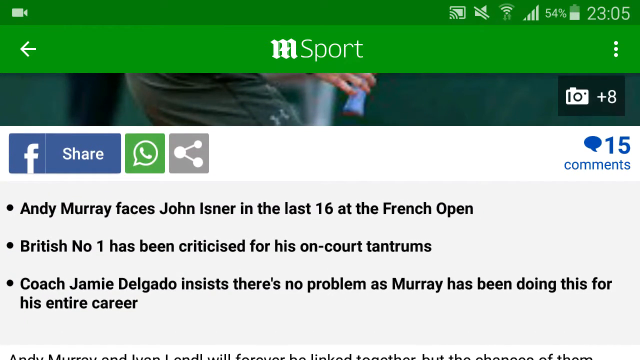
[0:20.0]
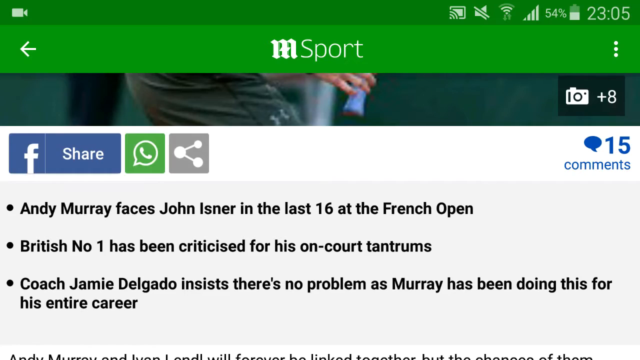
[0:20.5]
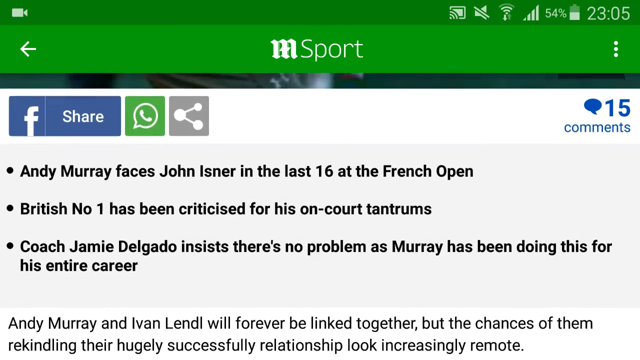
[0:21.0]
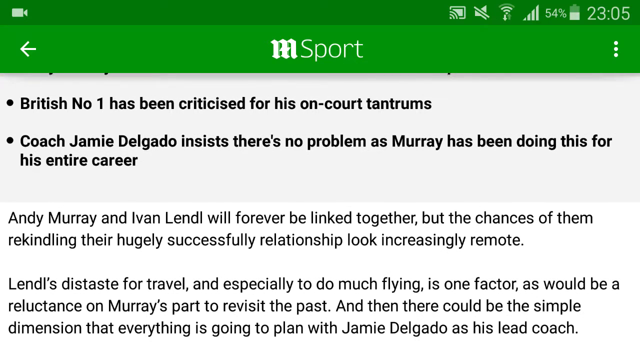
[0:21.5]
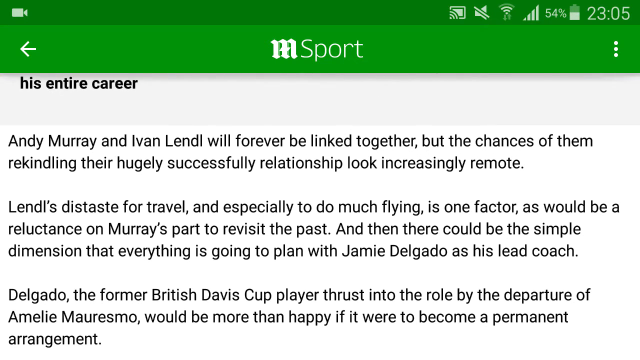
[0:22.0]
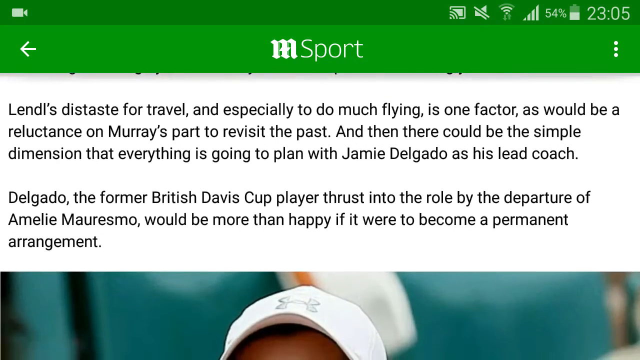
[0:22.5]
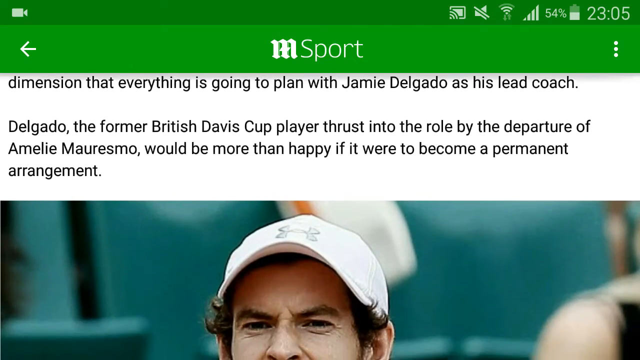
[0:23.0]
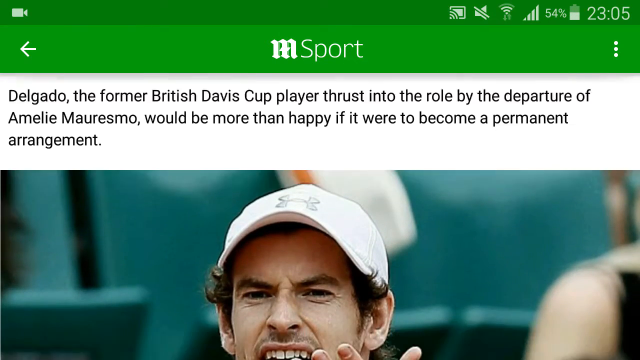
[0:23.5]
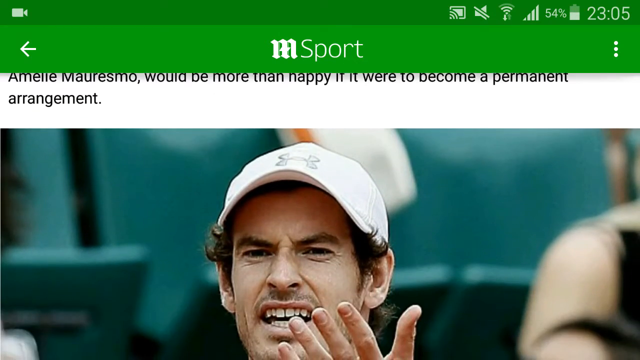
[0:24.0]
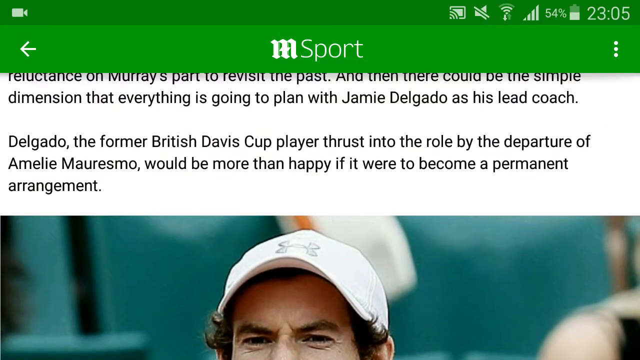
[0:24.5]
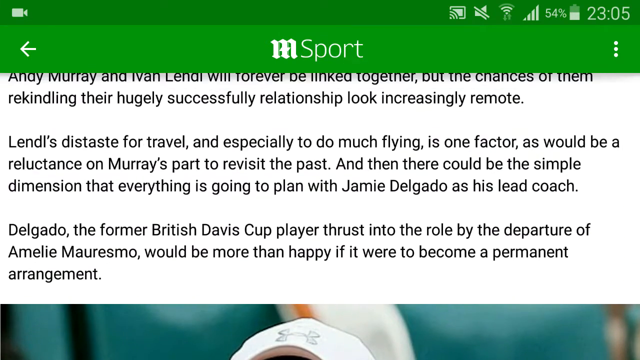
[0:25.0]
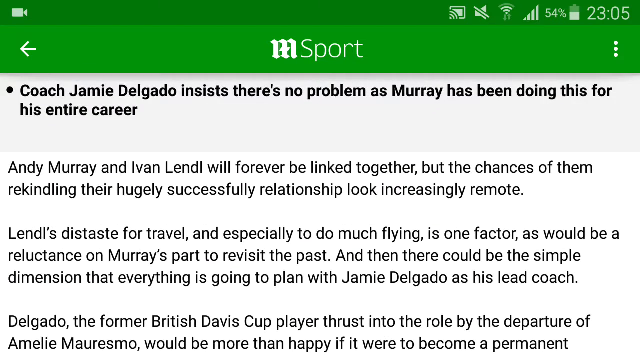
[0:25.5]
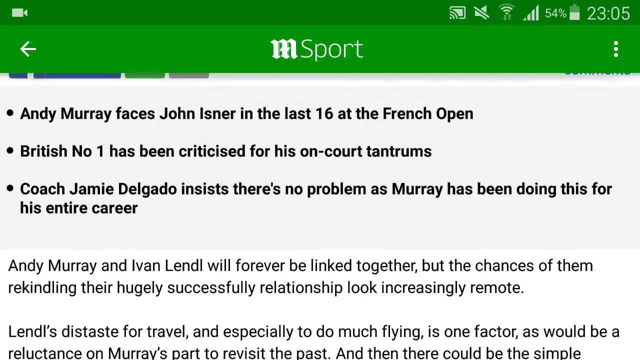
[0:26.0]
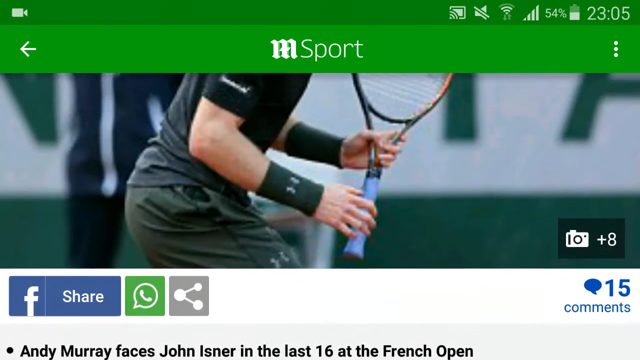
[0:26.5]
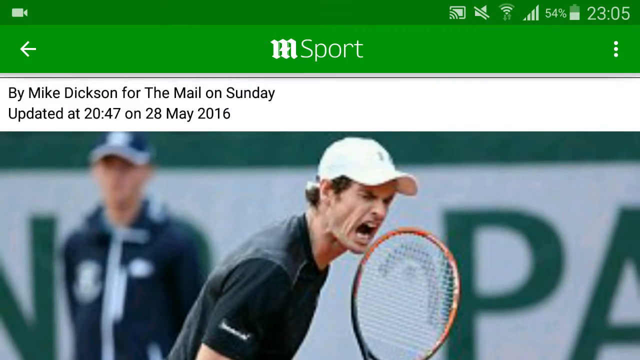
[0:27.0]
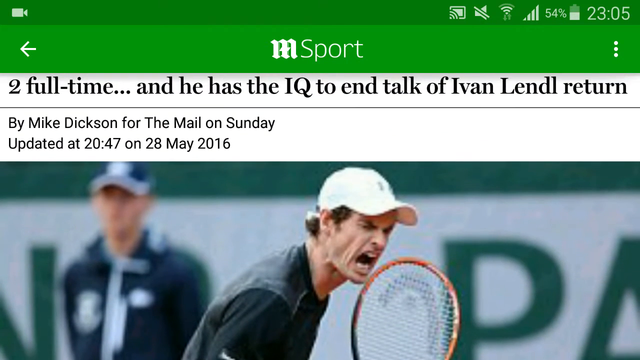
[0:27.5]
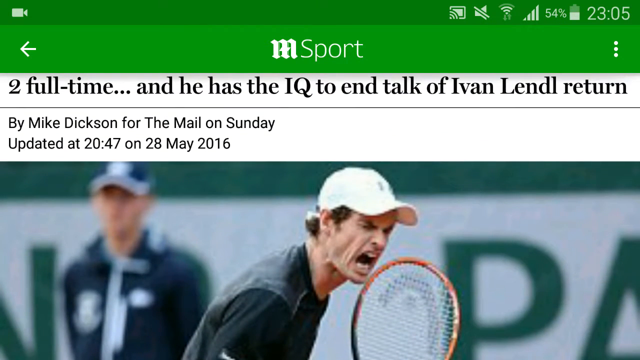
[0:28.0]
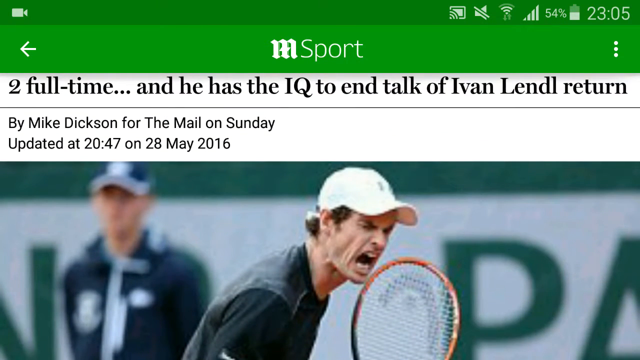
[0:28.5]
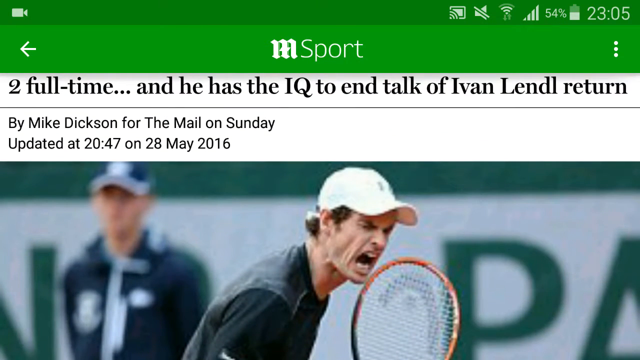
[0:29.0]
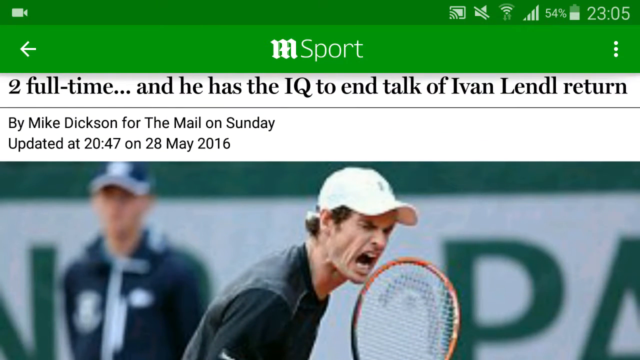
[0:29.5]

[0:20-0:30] A newspaper article about tennis and Andy Murray is open on a mobile phone, with "M Sport" in white on a green background at the top of the screen. The page is scrolled down past three dot points about Andy Murray and on through the paragraphs of the article. Further down is a photo of Andy Murray wearing a white baseball cap and lifting his left hand, as if a bit disgruntled with a call. The page is scrolled back up to the dot points and then to the top of the article, where a different photo shows Murray on court, looking like Roland Garros, wearing a black top and sort of celebrating aggressively after winning a point. The headline is partially visible, and then the page is scrolled down again.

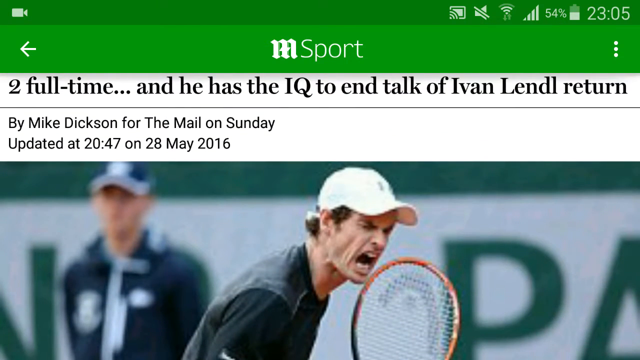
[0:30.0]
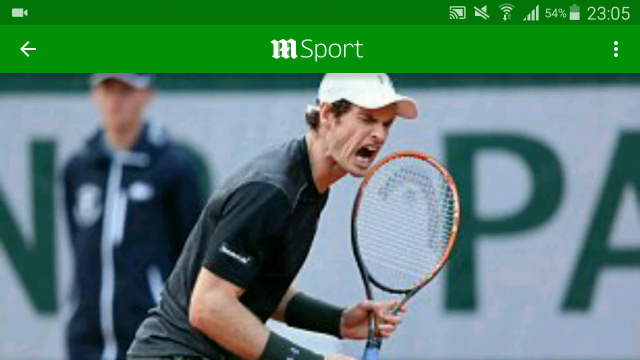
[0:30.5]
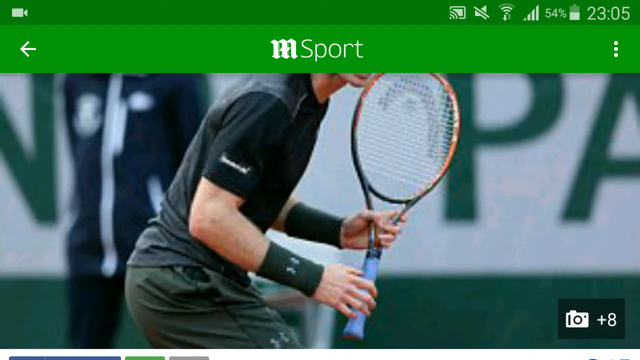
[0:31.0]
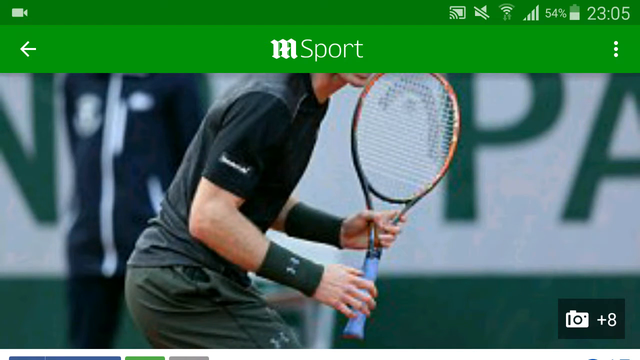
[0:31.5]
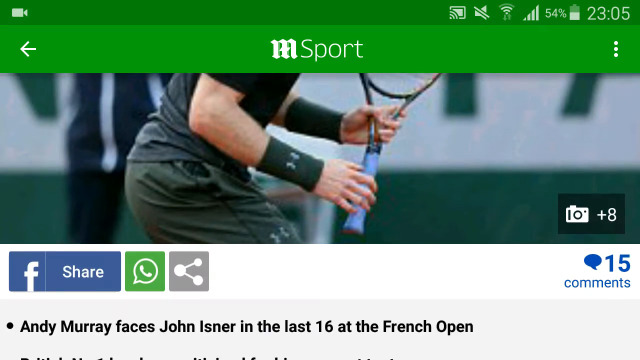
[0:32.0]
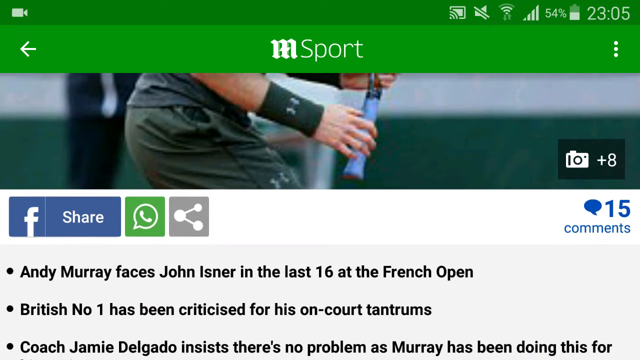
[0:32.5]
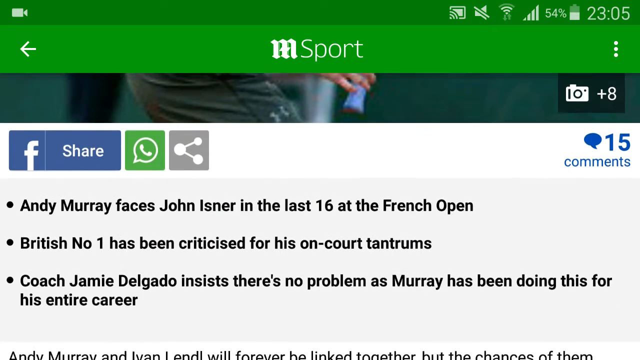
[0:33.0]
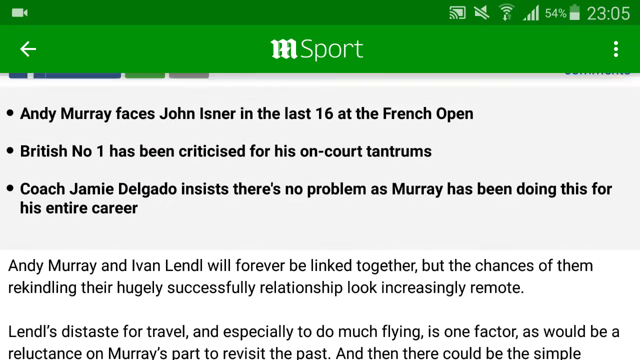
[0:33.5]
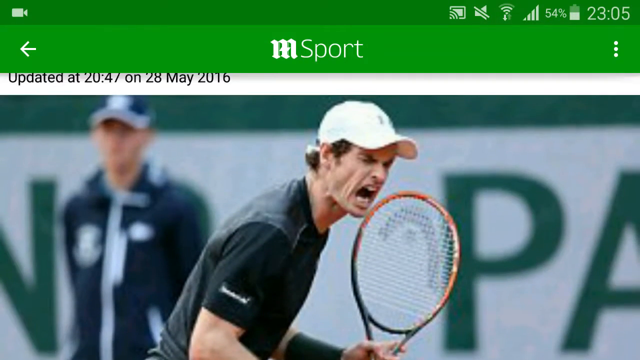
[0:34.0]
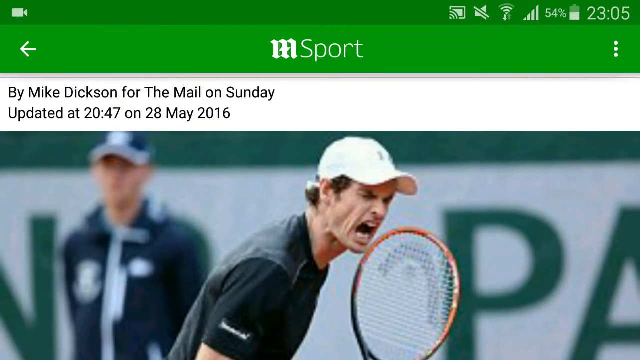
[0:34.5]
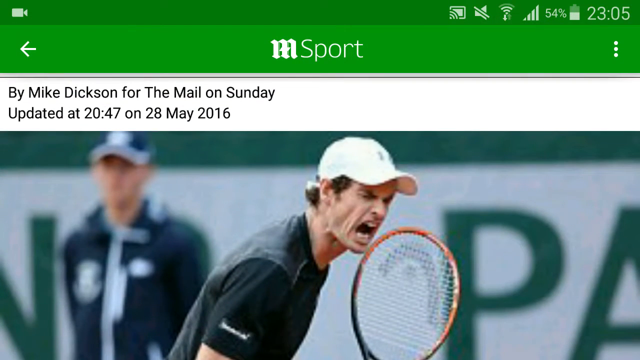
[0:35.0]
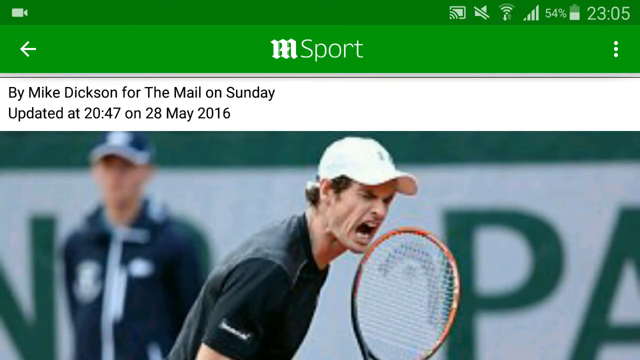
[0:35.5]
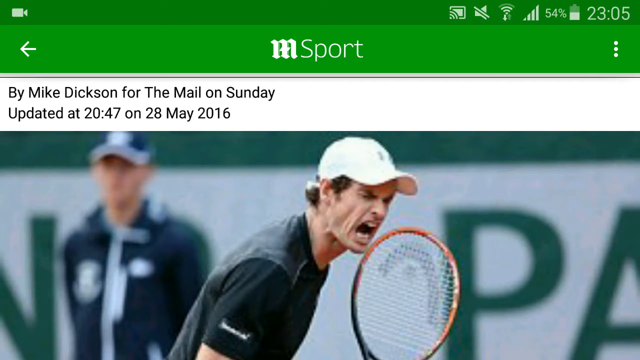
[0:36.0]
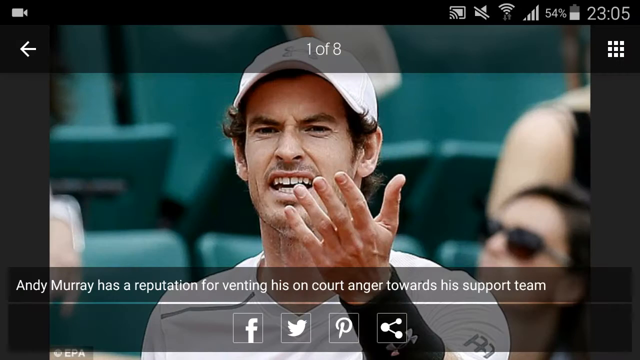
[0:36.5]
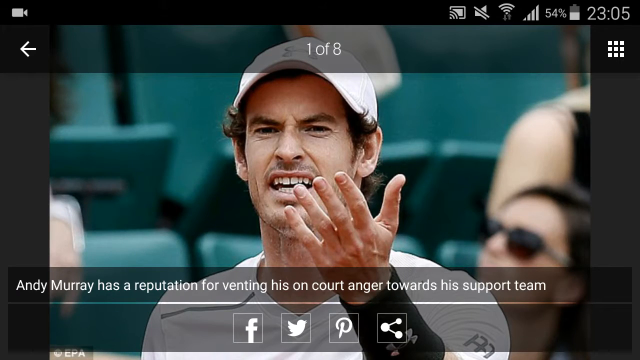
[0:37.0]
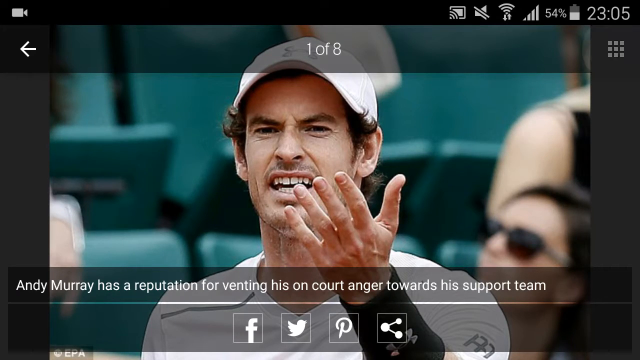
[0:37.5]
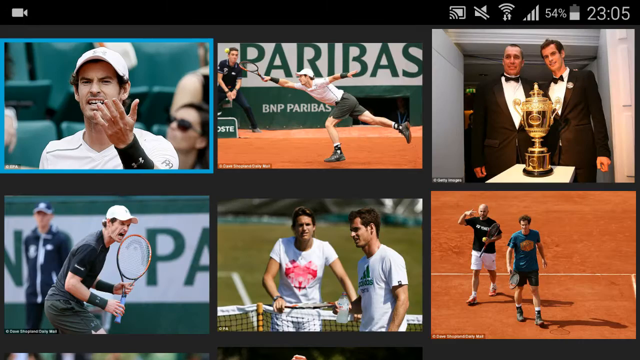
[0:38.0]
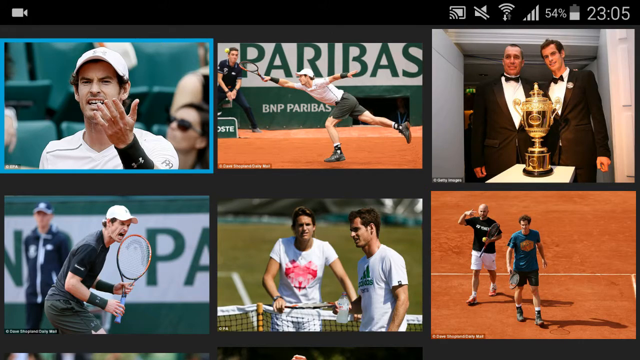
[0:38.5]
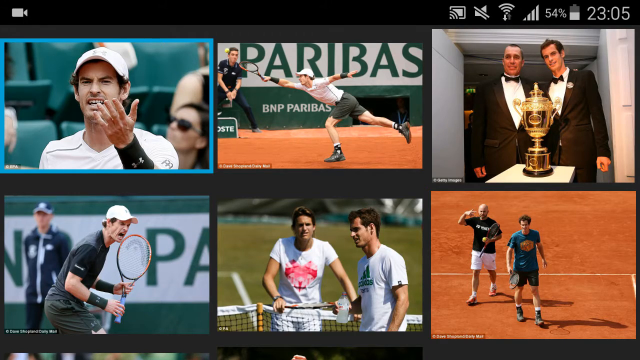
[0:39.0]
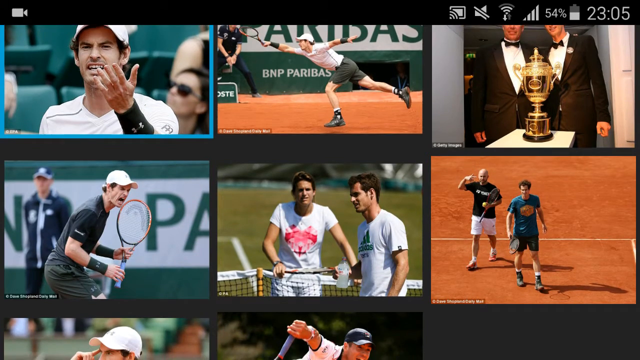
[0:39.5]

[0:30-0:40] Someone scrolls through a newspaper article about Andy Murray on a mobile device, with mobile icons in the top right of the screen and the time showing 11.05 at night. "M-Sport" appears at the top of the page in white on a green background. A picture of Andy Murray is on screen as the page scrolls down; he is in sort of a backhand stance but sort of celebrating winning a point. There are eight photos available, and the view switches to a set of photos of Murray. One shows him sitting in a chair wearing a white hat and a white shirt, raising his left hand as if sort of arguing something. To the right of that is a photo of him at Roland Garros, outstretched and going for the ball on the left. To the right of that is a picture of him with what looks like Ivan Lendl, both in tuxedos, with a championship trophy in front of them. In the bottom left corner is the photo seen earlier, with him sort of celebrating winning a point. To the right of that he is in some sort of training, with another player or a coach standing on the other side of the net, closer to the camera, wearing a white Adidas t-shirt. To the right of that he looks like he is in a doubles match, wearing a light blue shirt, with someone in a black shirt with a shaved head next to him on the clay court. Scrolling further down reveals two more pictures below these.